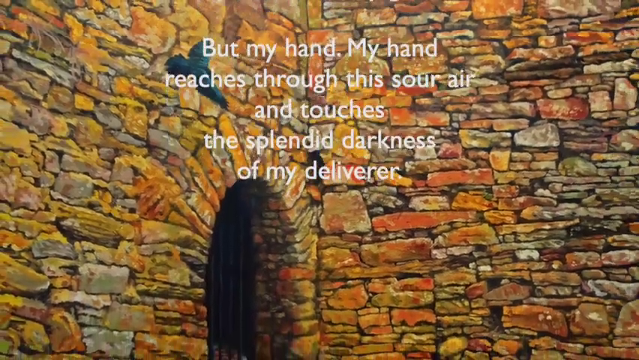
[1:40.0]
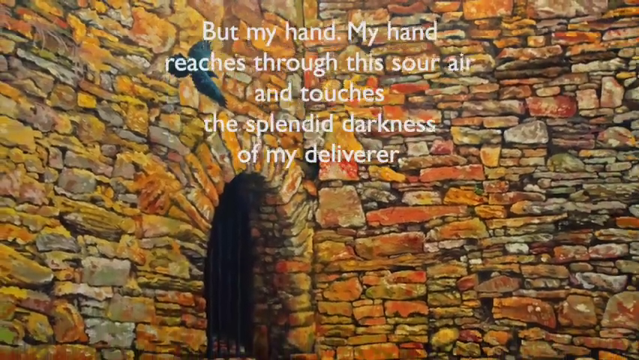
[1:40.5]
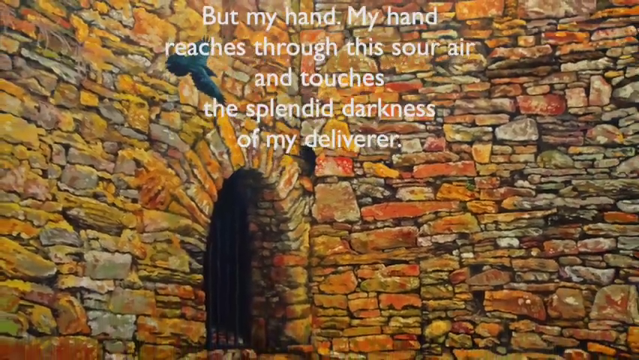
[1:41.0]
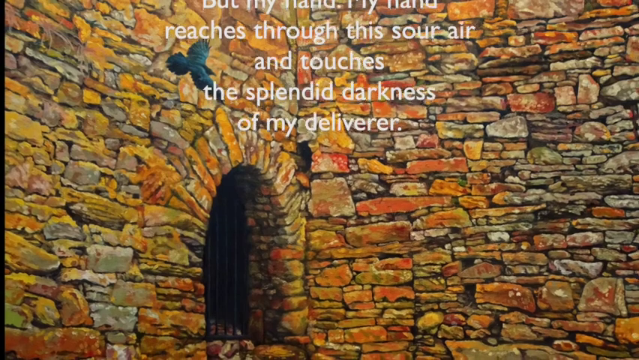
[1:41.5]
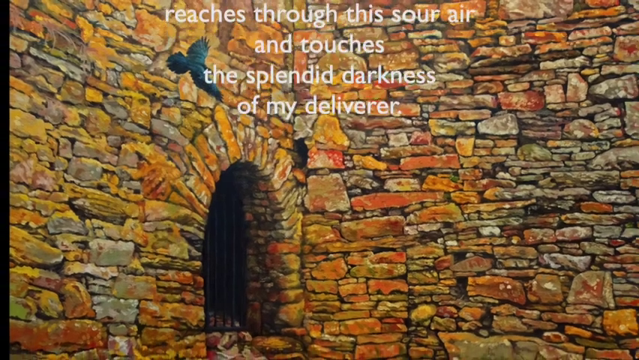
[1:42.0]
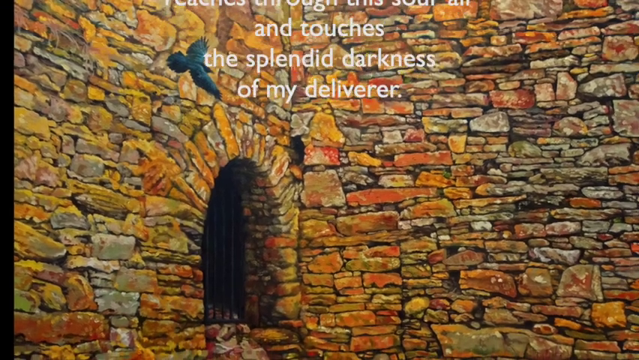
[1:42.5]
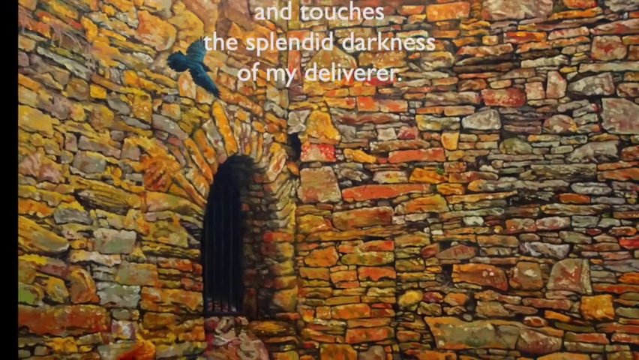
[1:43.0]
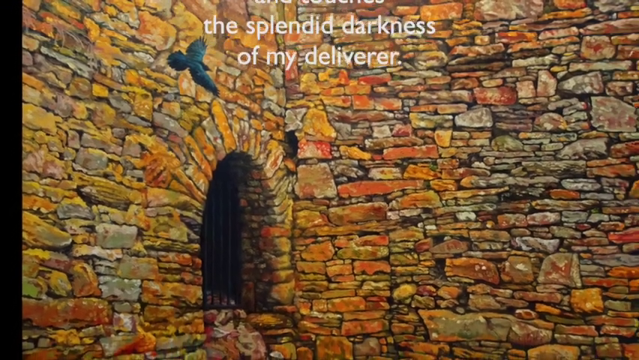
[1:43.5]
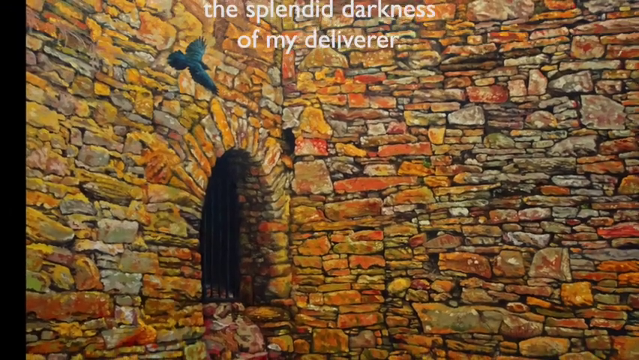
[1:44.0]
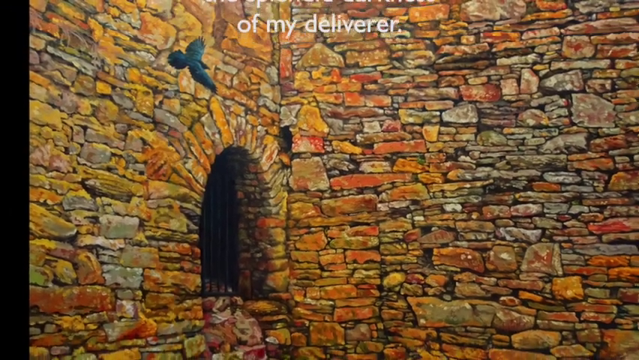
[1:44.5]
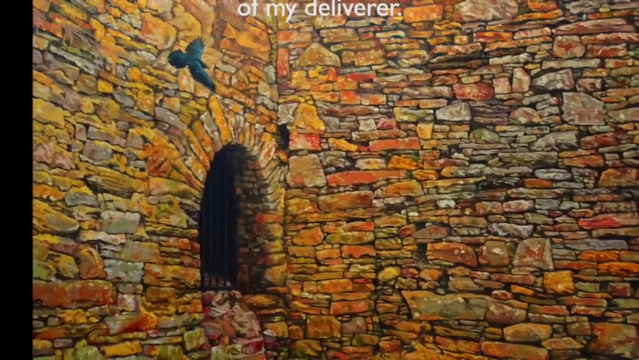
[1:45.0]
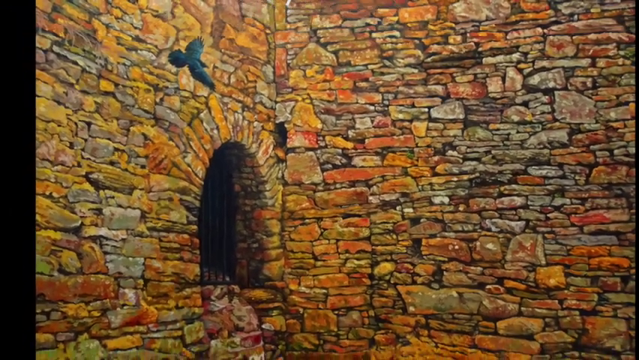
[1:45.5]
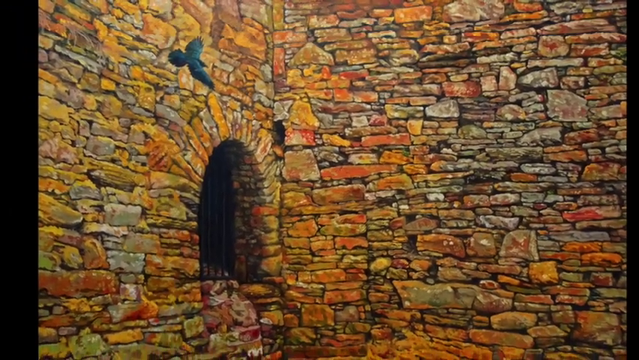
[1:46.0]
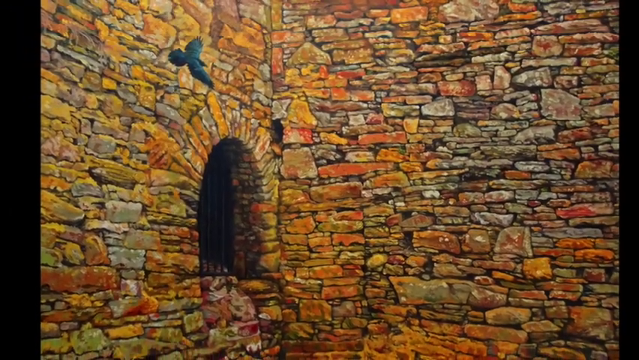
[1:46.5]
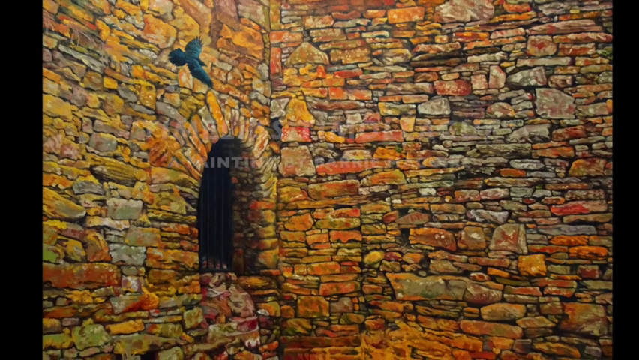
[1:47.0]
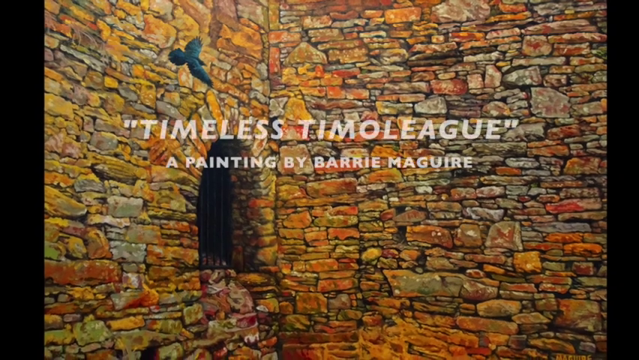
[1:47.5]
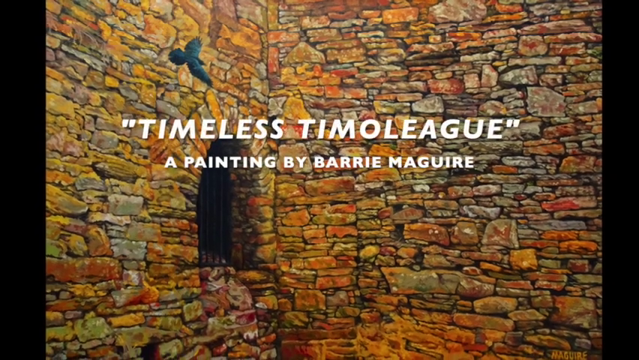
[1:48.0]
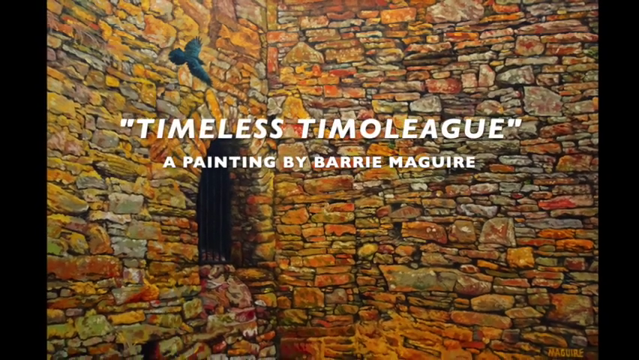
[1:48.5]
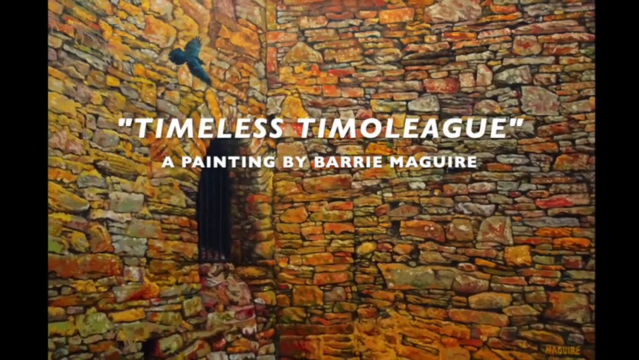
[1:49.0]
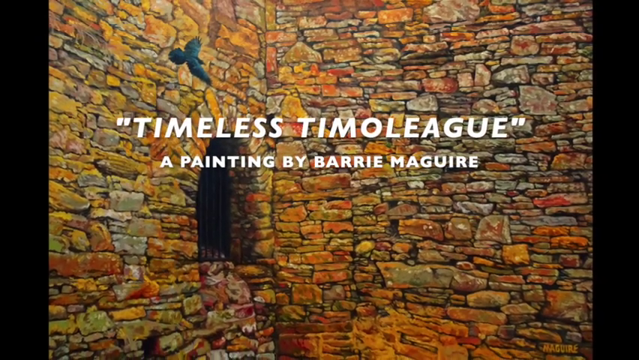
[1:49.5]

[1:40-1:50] The final part of the poem is shown: "but my hand my hand reaches through this sour air and touches the splendid darkness of my deliverer." In the backdrop is the cobblestone wall where two sides meet, with a small window on the left-hand side. The window has black metal poles coming down that appear to be a grate blocking it, and there appears to be a black crow behind the white wording. As the poem finishes, the view moves out a little to show the whole picture, and the screen reads "Timeless Timoleague, a painting by Barrie McGuire."